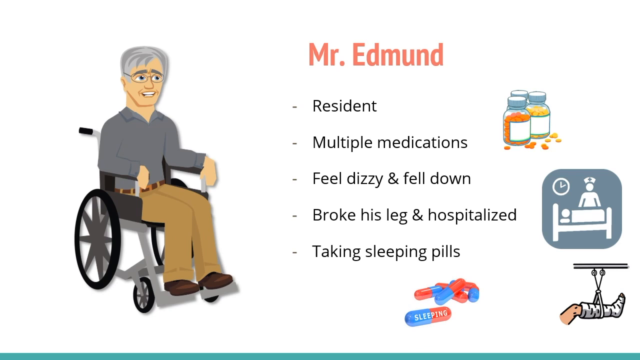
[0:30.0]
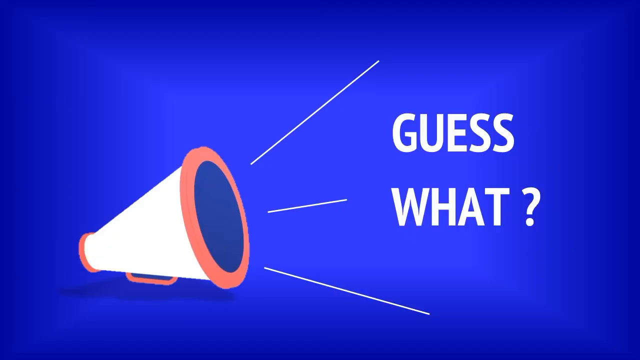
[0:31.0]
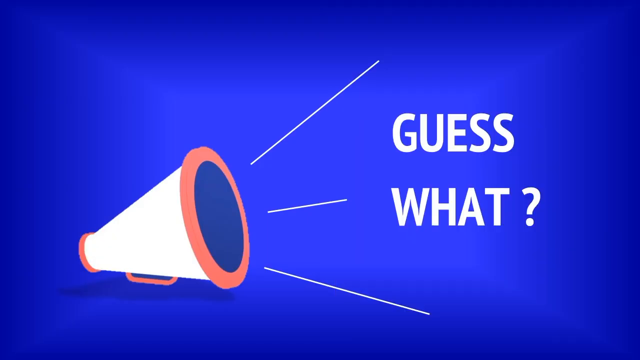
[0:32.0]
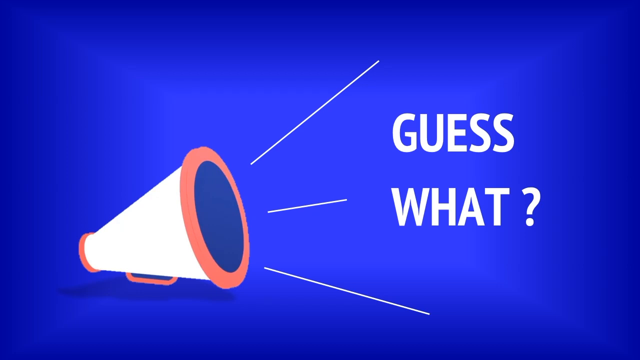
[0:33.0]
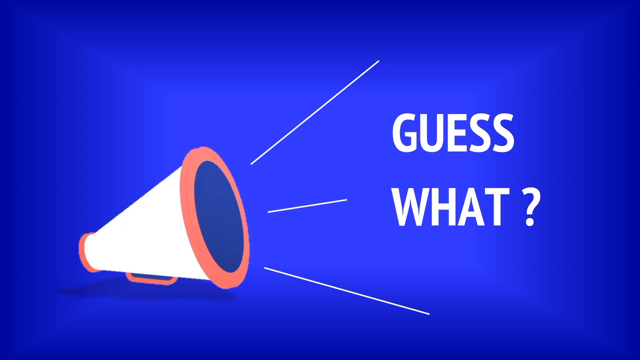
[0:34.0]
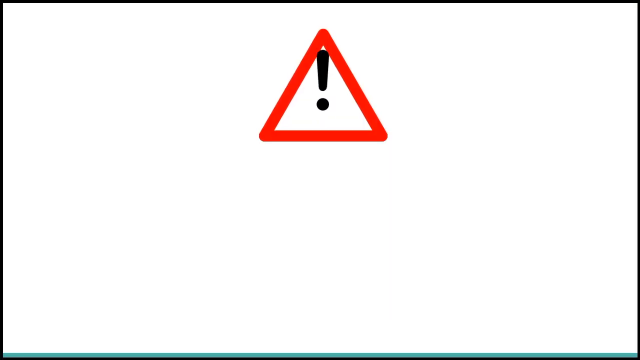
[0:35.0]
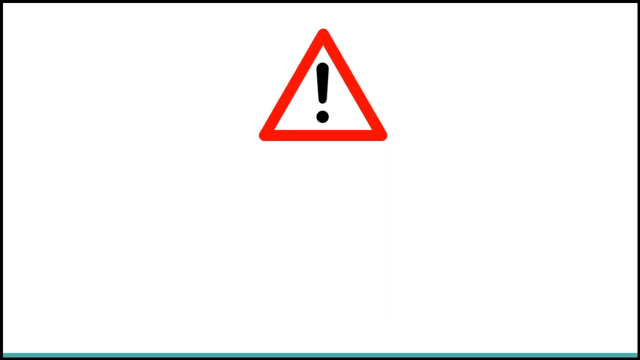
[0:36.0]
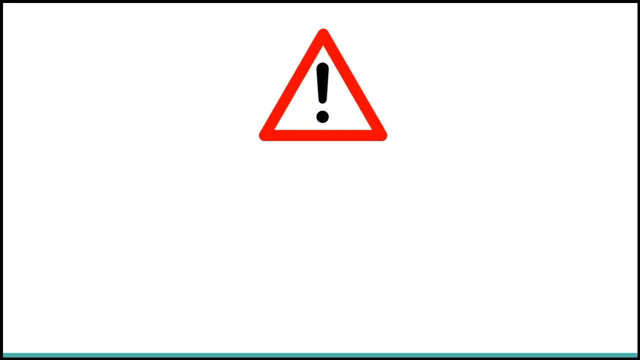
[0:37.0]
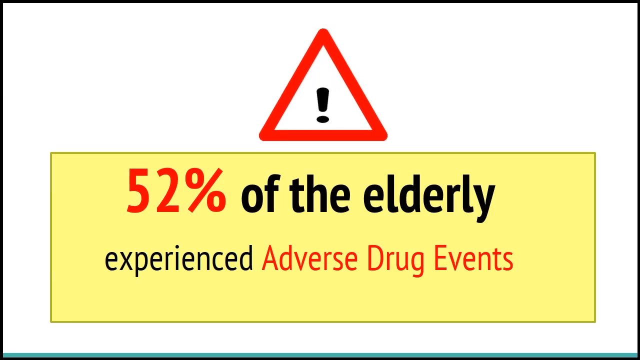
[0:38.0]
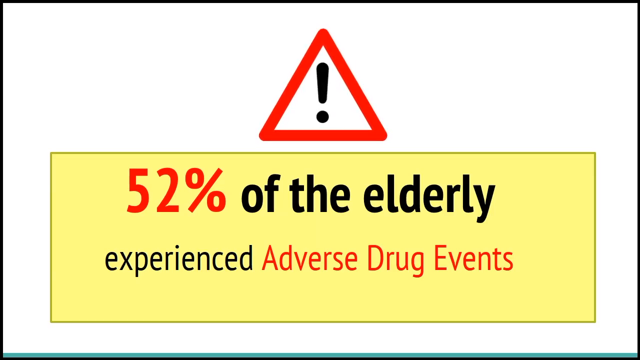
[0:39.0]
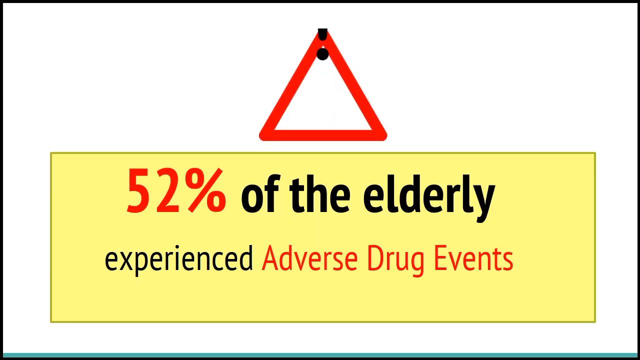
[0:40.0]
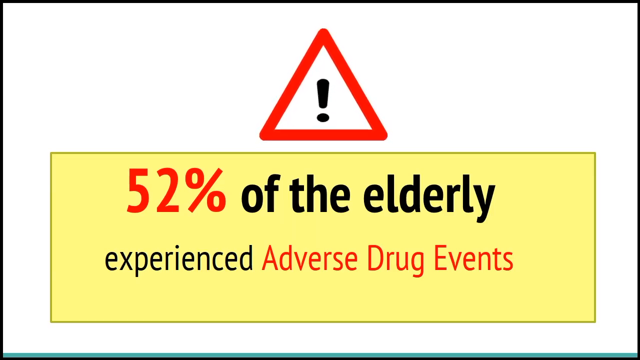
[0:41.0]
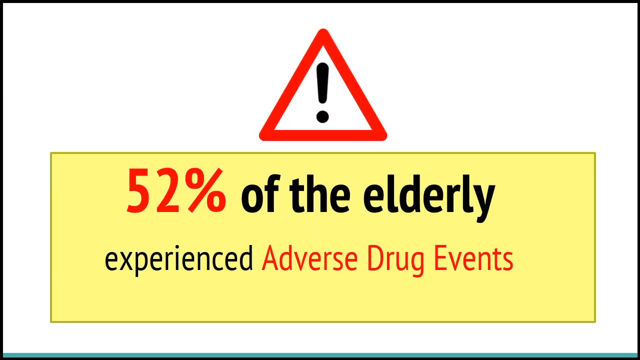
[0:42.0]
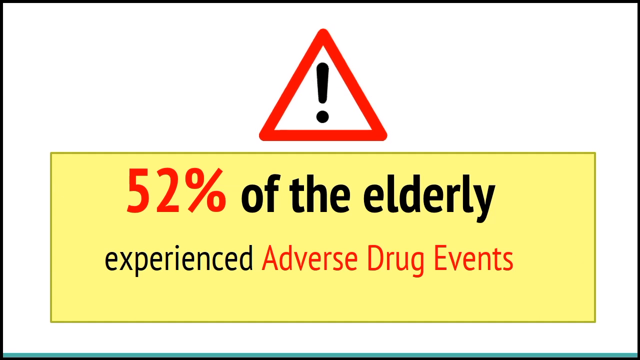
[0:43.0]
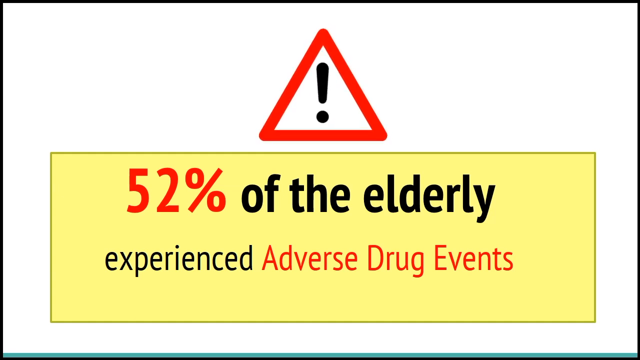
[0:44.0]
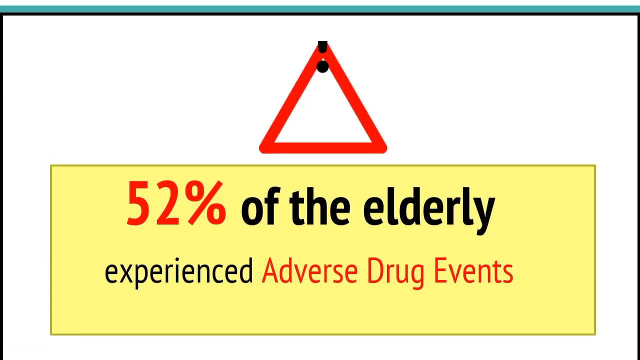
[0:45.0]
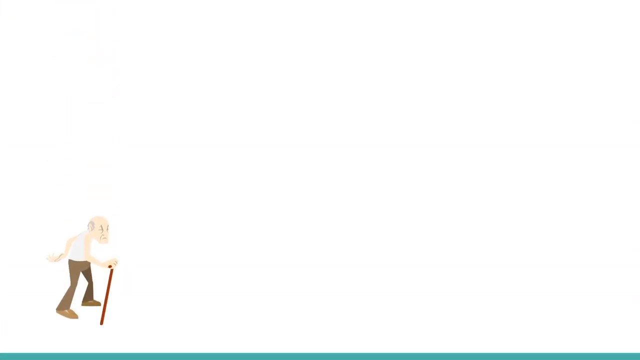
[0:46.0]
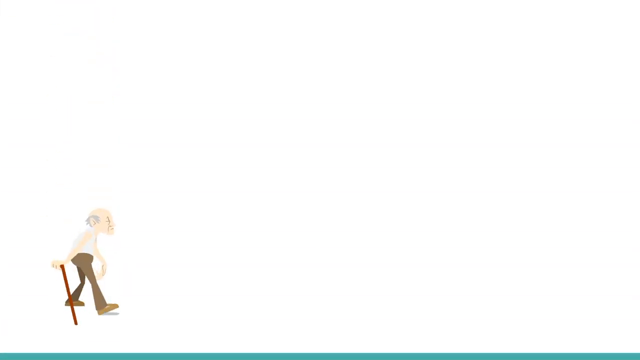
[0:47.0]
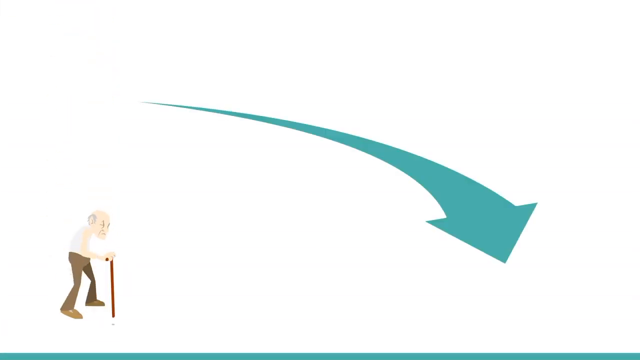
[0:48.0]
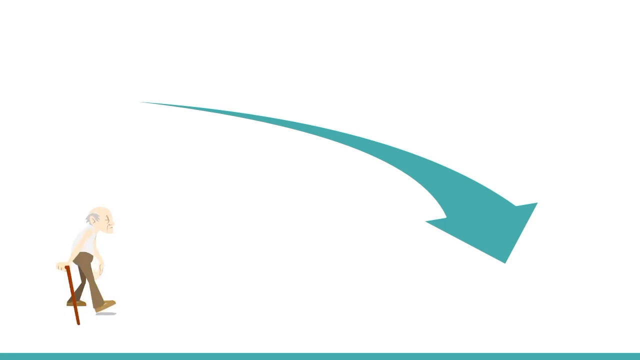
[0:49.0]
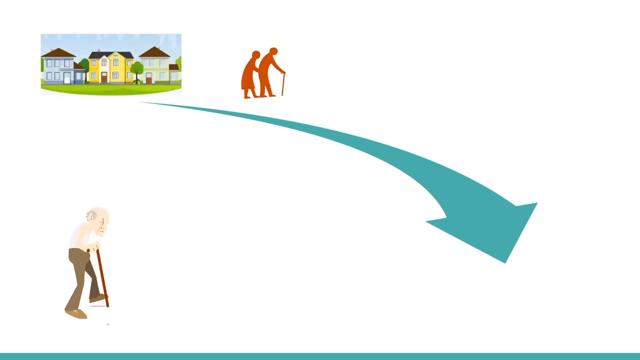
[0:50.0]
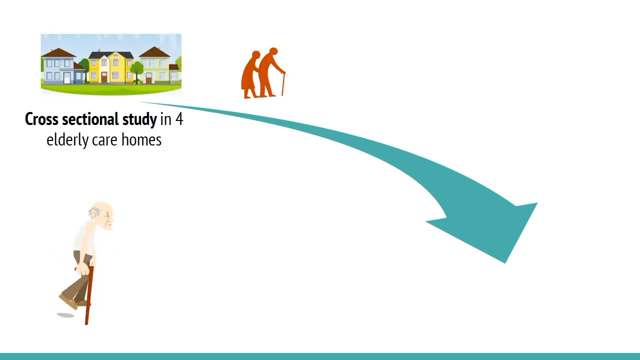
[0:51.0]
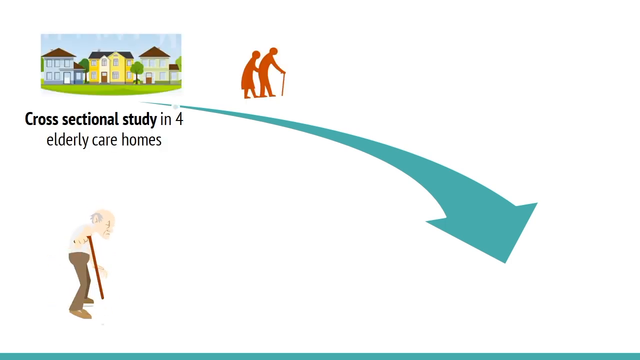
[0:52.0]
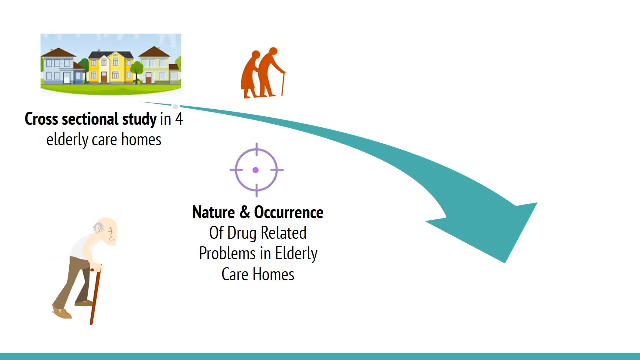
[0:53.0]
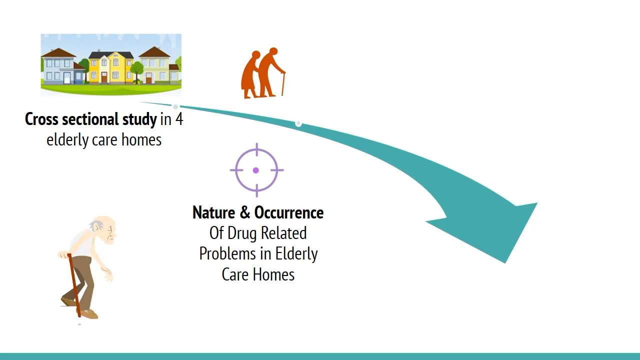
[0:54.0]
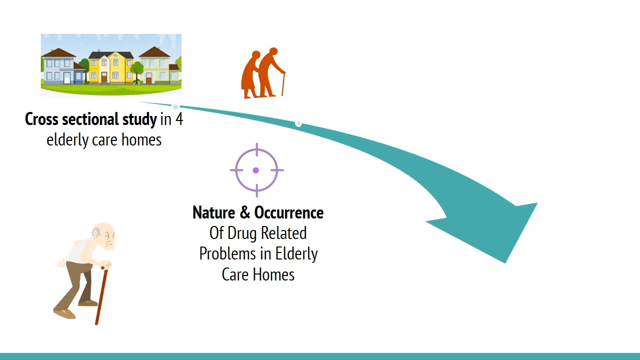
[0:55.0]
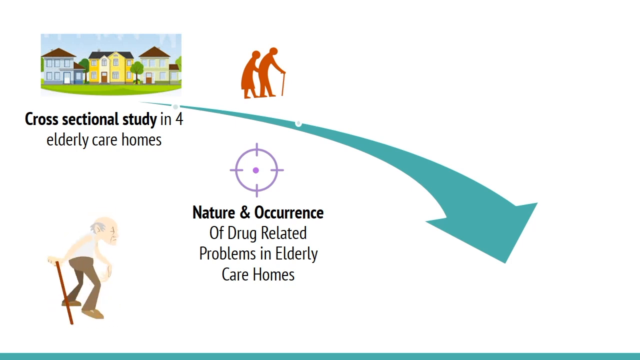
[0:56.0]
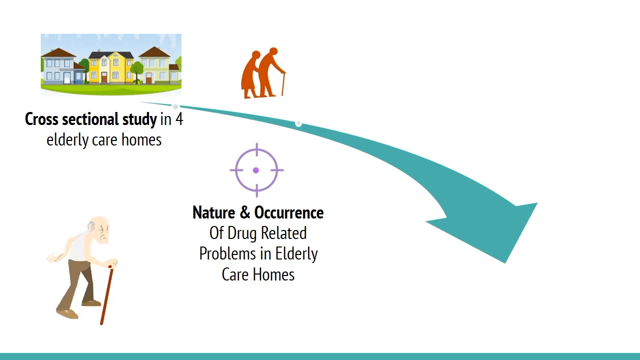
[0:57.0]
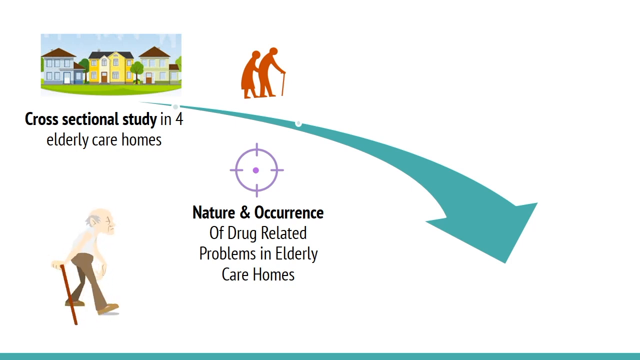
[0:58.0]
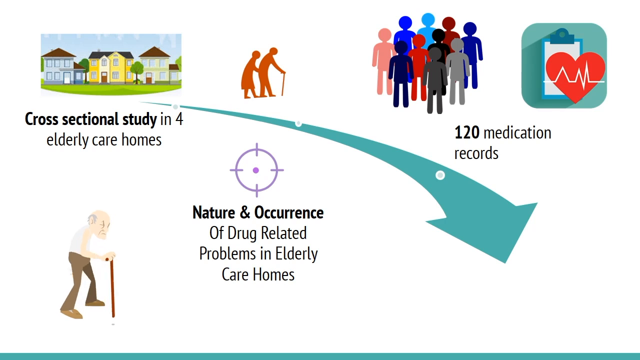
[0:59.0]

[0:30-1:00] Mr. Edmund is in his wheelchair, with the text saying he is a resident, takes multiple medications, felt dizzy and fell down, broke his leg and was hospitalized, and takes sleeping pills. The scene changes to a blue screen with a megaphone and white lines, as if someone is talking loudly through it, and big white letters on the right side read "guess what?" The next page has a red triangle with an exclamation point in the top middle of the screen and a large yellow rectangle reading "52% of the elderly experienced adverse drug events." At the bottom of the screen, a little elderly man walks very bent over with a cane; he wears a white undershirt and glasses and has white hair around the edges. A blue arrow comes out of the white part of the page and swerves from the left middle section down to the lower right. In the upper left is what looks like a little village of three or four houses, blue ones, one yellow and one white, with the text "cross-sectional study in four elderly care homes." Just above the blue arrow is a little picture of an elderly couple walking with canes. Under the arrow is a circle with a dot in the middle and little points at north, south, east and west, with the text "nature and occurrence of drug-related problems in elderly care homes." At the top right, several faceless figures stand beside a chart hanging on a blue wall, showing a red heart with lines through it, and the text reads "120 medication records."